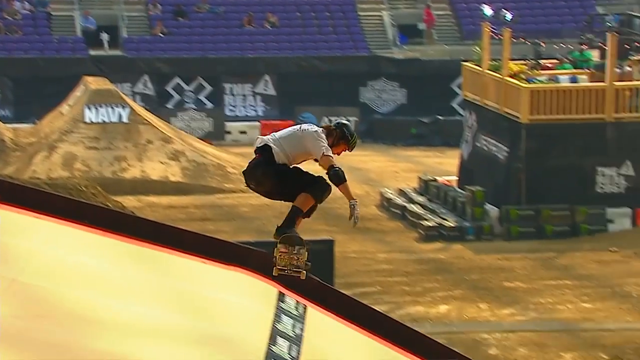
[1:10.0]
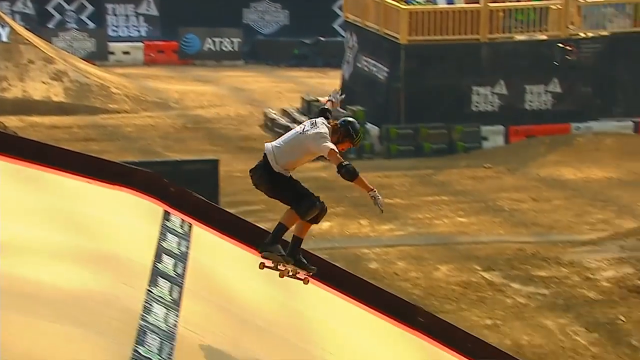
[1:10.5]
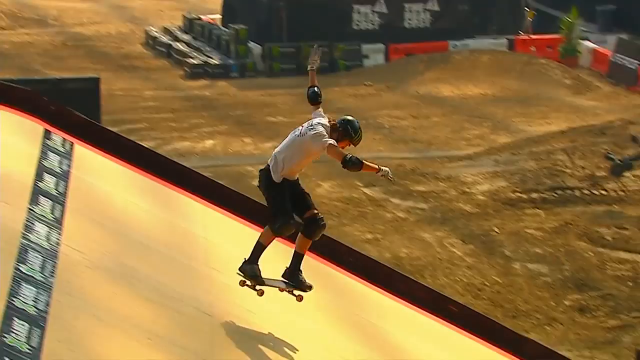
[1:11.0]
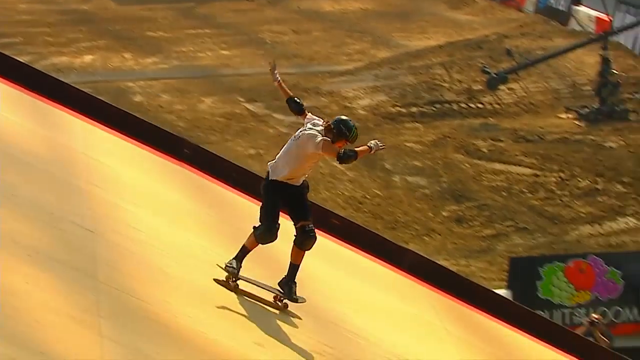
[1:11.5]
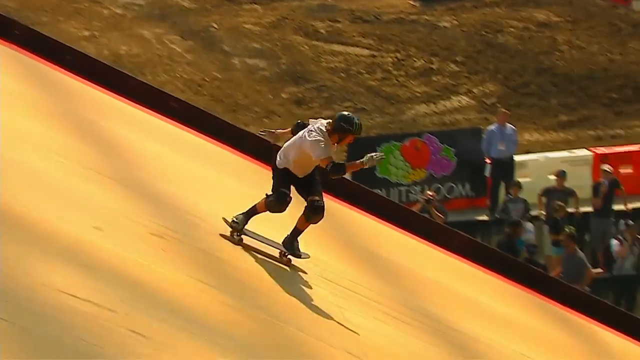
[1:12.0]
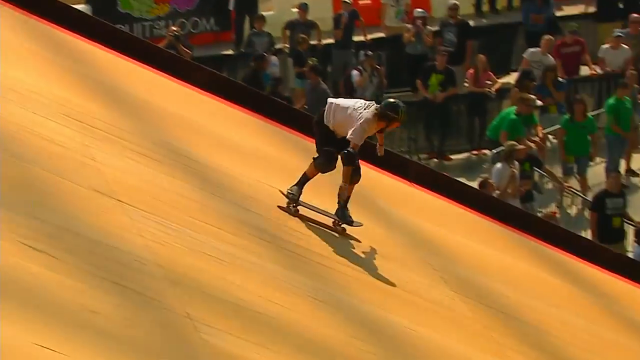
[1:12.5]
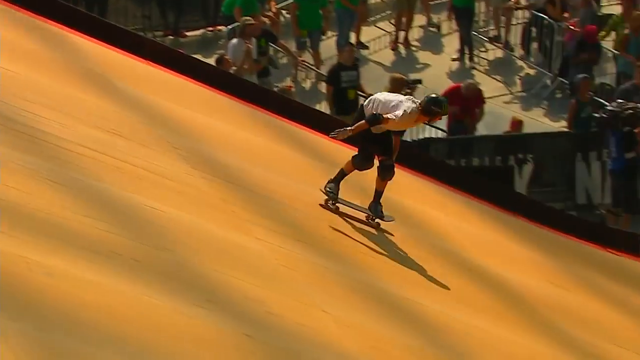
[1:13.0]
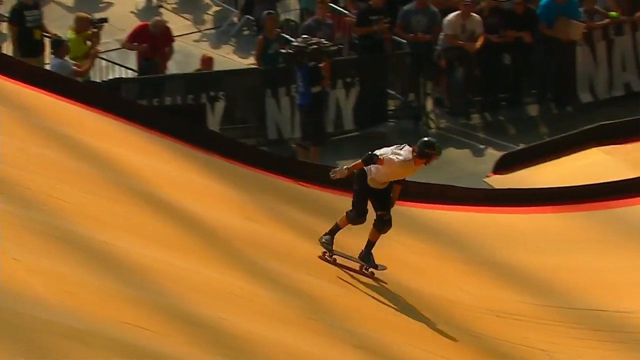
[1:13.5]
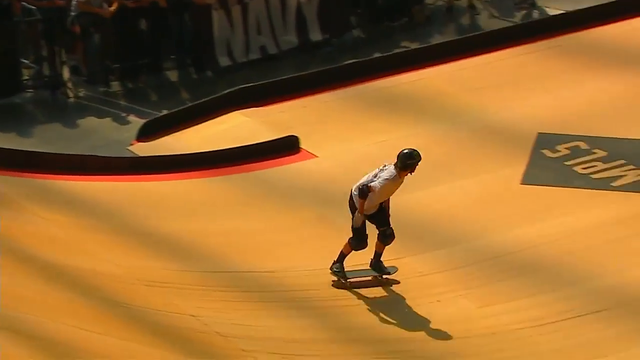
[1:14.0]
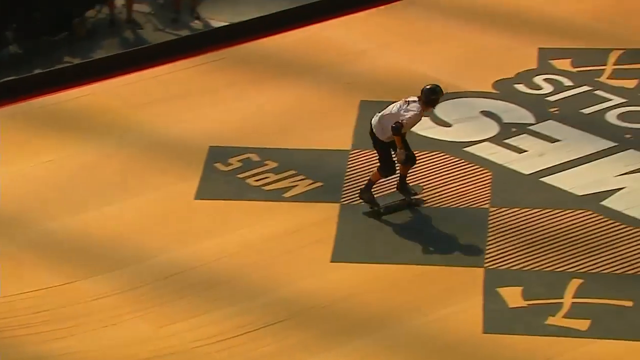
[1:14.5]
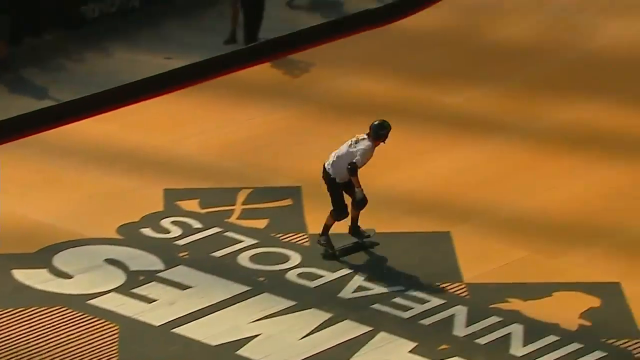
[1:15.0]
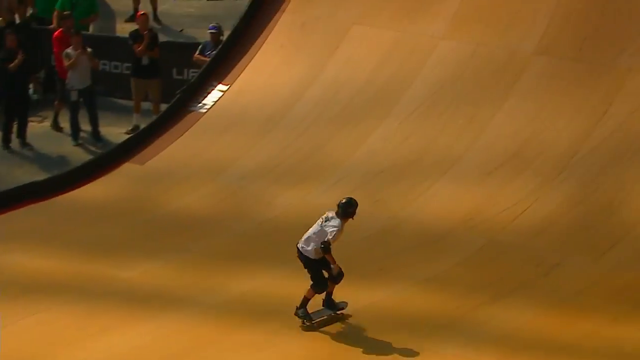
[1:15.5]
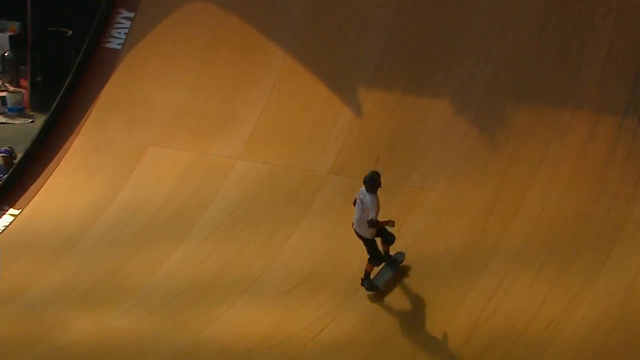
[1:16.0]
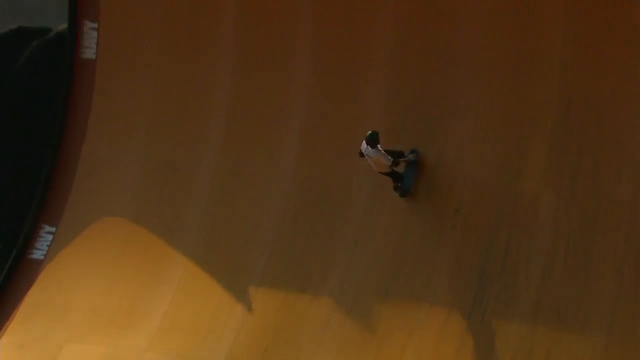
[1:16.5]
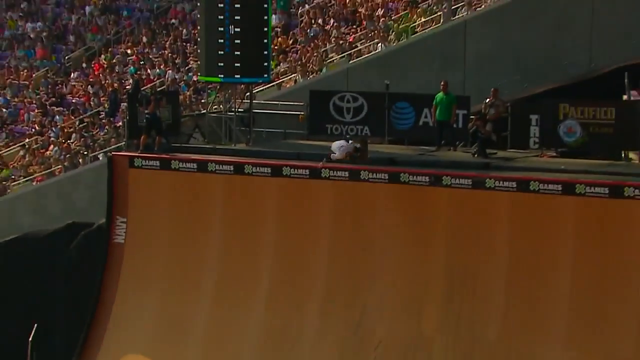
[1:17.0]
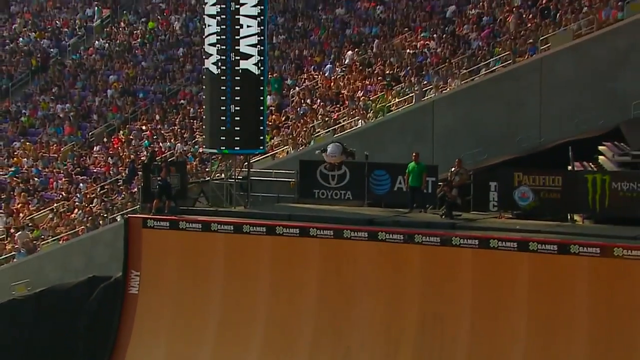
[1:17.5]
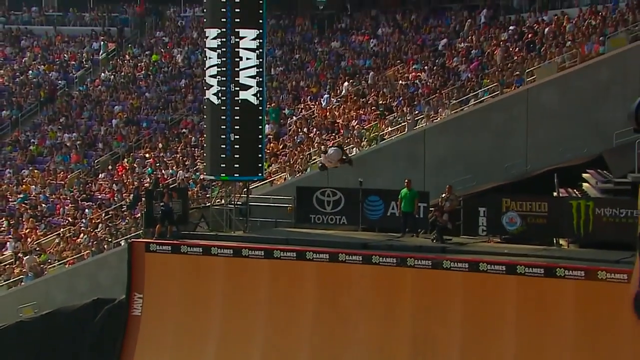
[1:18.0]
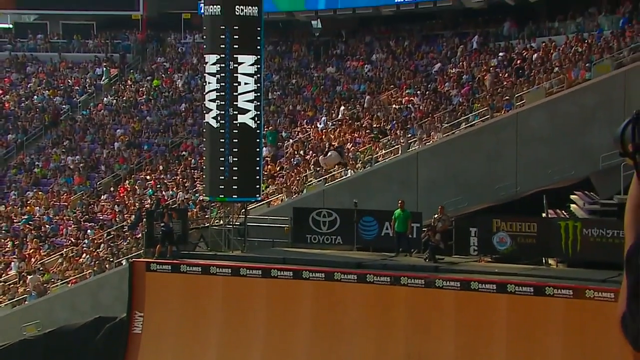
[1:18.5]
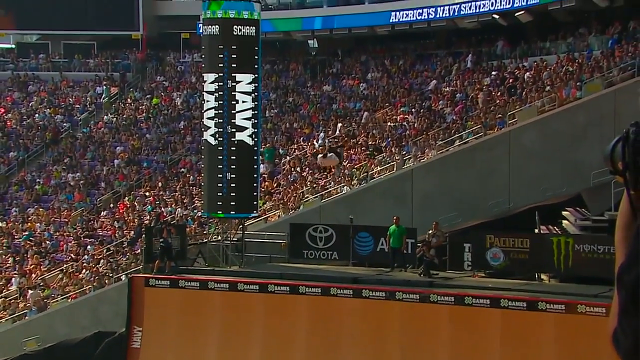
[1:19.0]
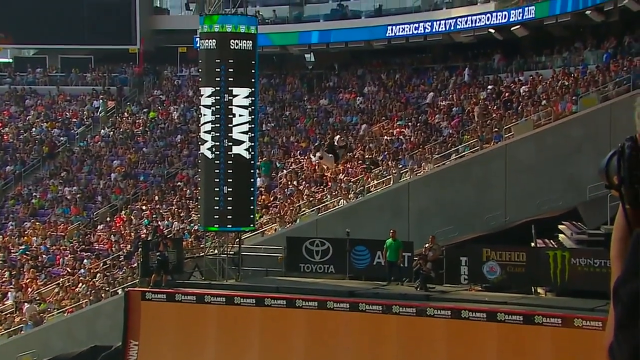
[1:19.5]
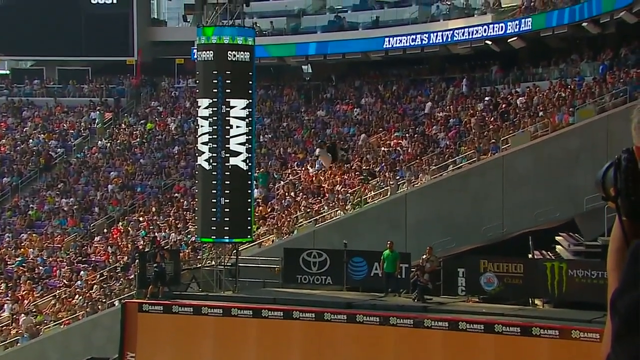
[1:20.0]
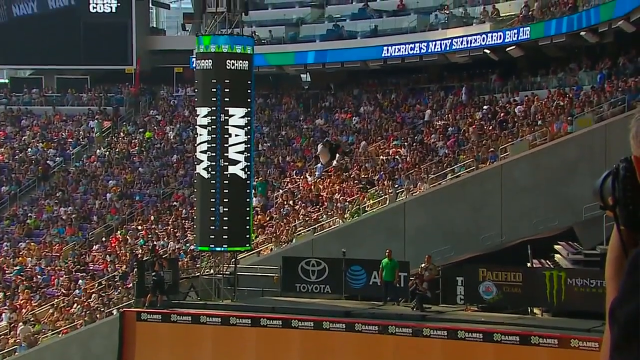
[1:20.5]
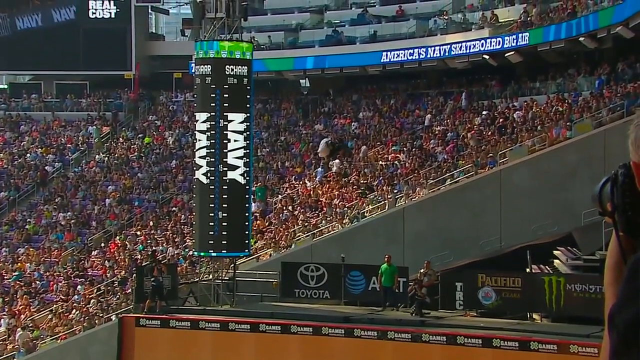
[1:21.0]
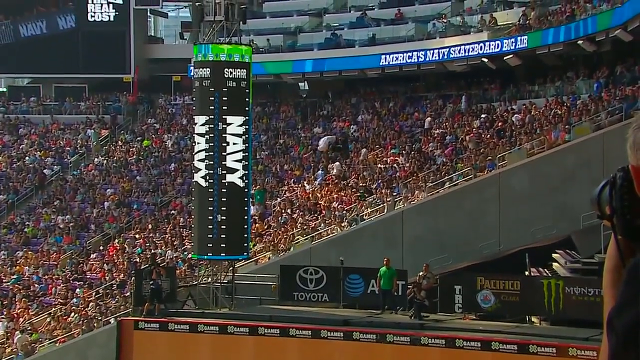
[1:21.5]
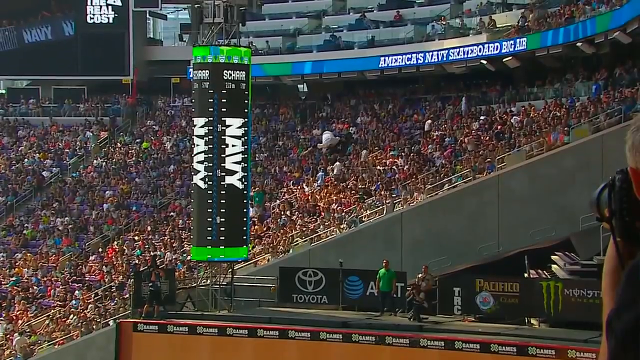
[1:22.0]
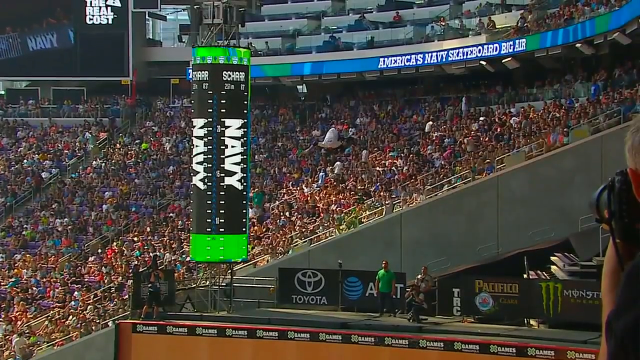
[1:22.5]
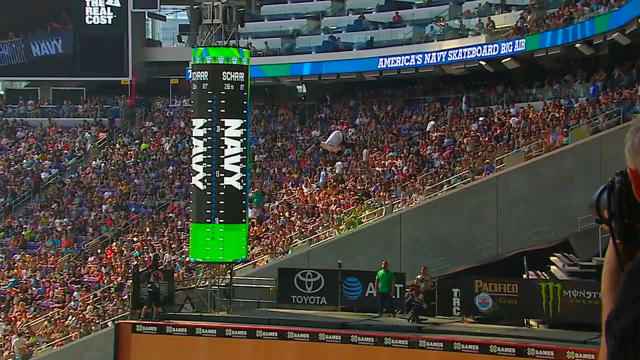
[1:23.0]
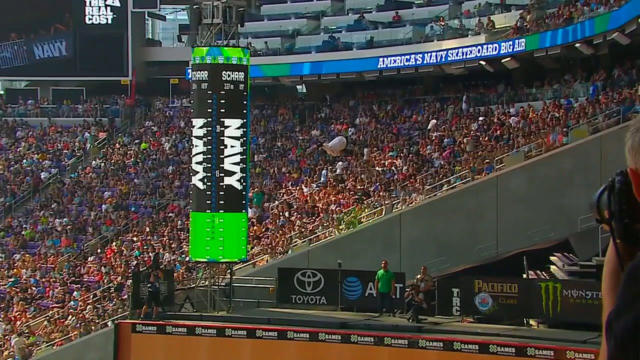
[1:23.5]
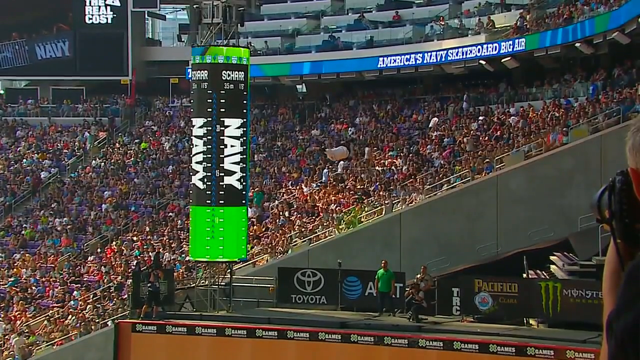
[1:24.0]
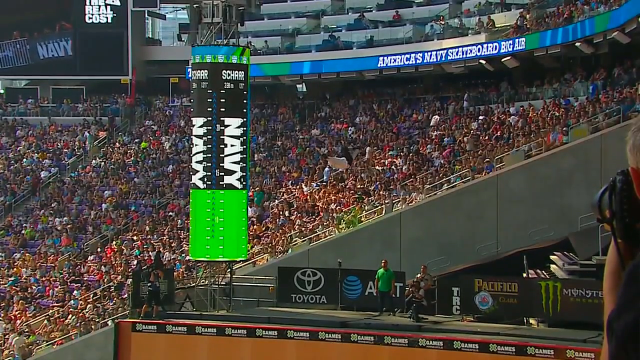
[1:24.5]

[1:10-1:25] Tom, in his white t-shirt, black shorts, black elbow and knee pads and black helmet, with a black skateboard, zooms down the light-colored wood halfpipe in another view of the jump. He crosses over an X Games logo, goes all the way up the side of the halfpipe, and spins around in the air four times. Hundreds of spectators are in blue stadium seats in the background. The shot cuts away from him in midair. A meter on the left side of the halfpipe advertises Navy on its side; a green bar jumps up maybe about a third of the way, apparently measuring how much air he gets going up the wall. Text in the background reads "America's Navy Skateboard Big Air." Three sections of fans are visible, and this section of the stadium is packed. A few support staff are standing at the top of the halfpipe, and a photographer is in the background.